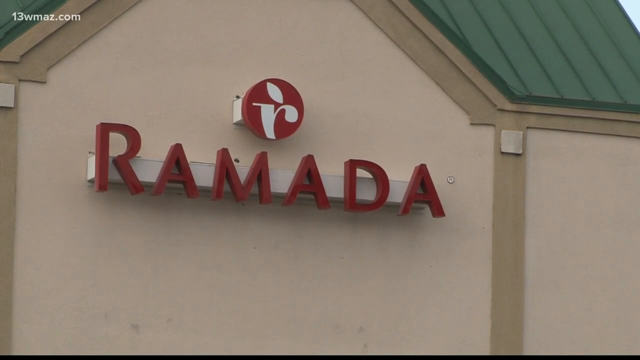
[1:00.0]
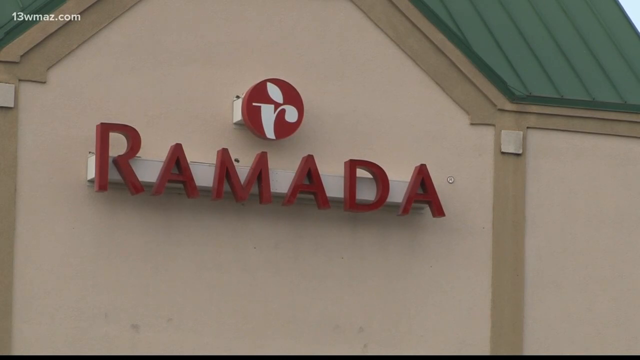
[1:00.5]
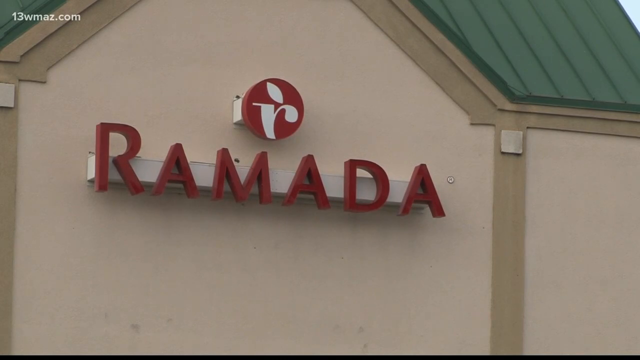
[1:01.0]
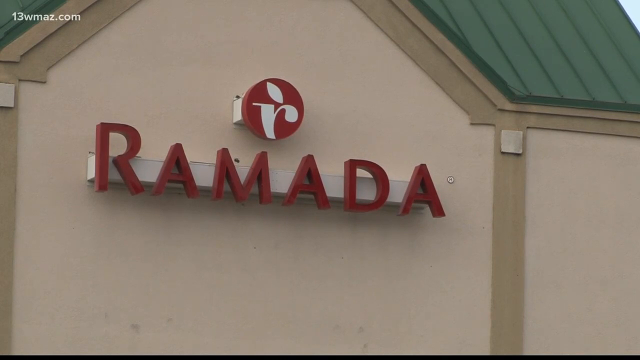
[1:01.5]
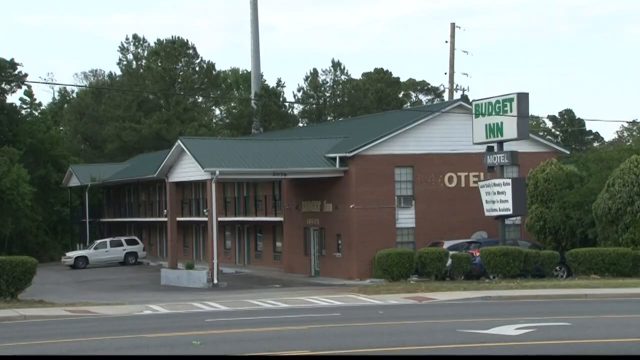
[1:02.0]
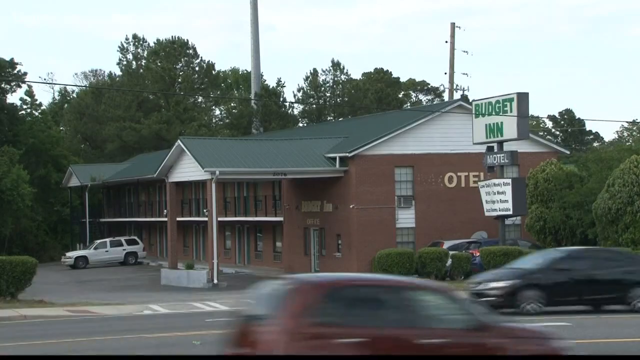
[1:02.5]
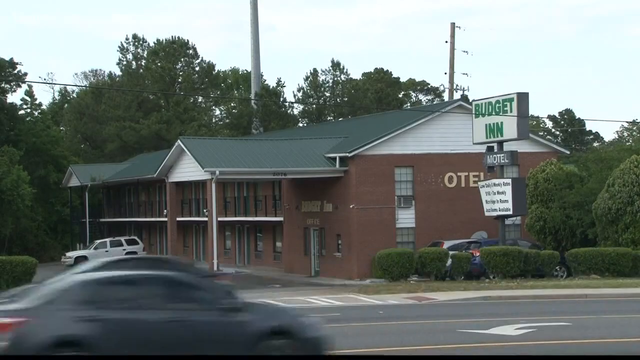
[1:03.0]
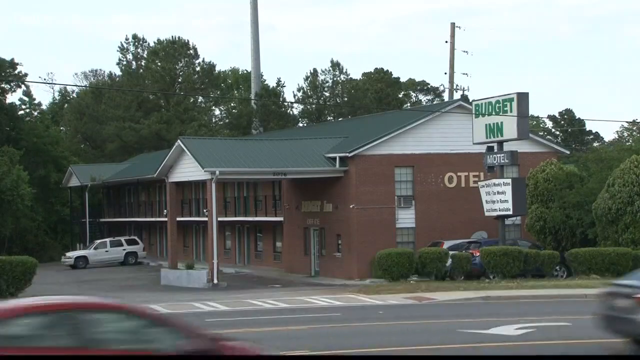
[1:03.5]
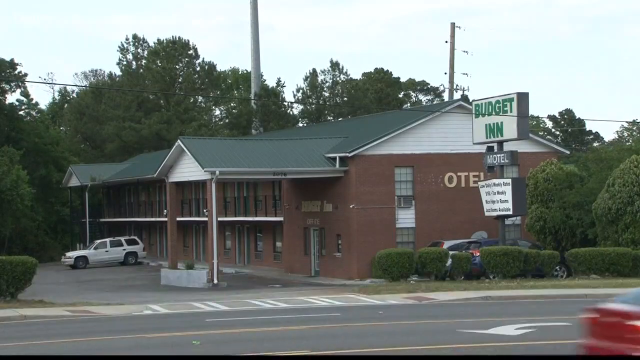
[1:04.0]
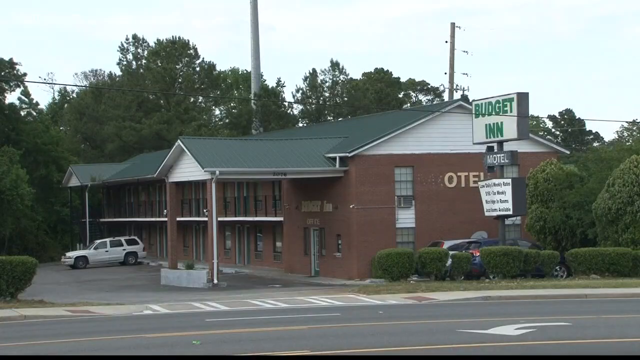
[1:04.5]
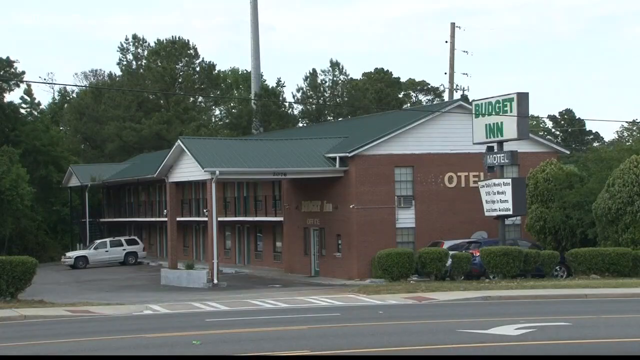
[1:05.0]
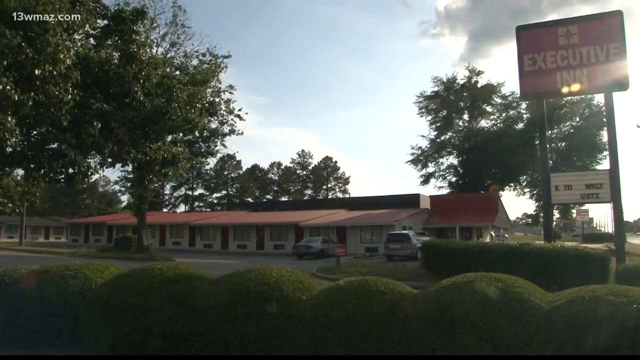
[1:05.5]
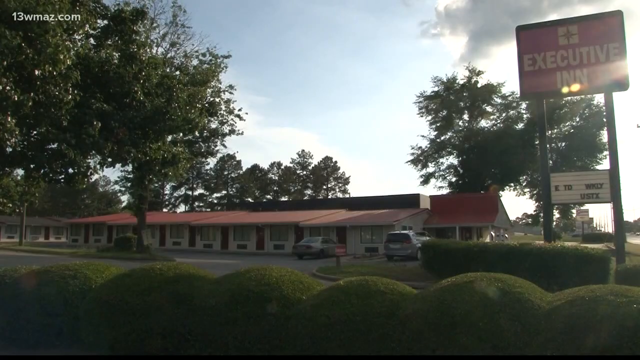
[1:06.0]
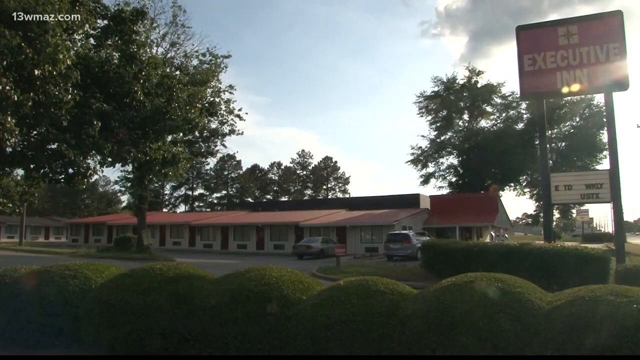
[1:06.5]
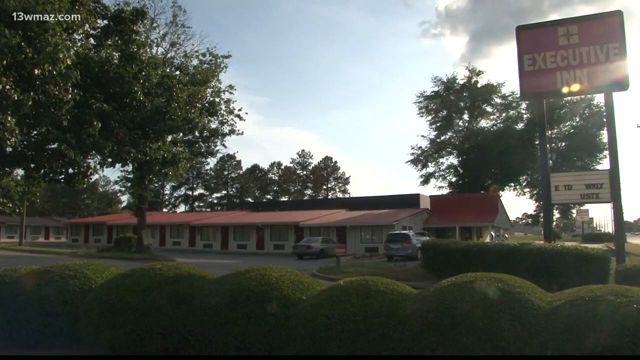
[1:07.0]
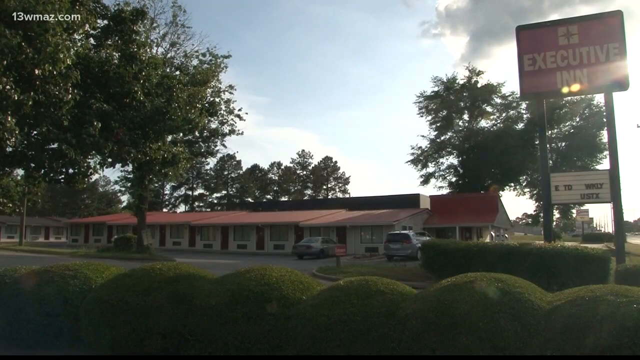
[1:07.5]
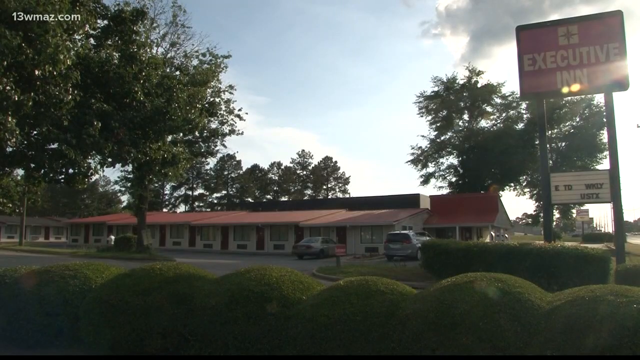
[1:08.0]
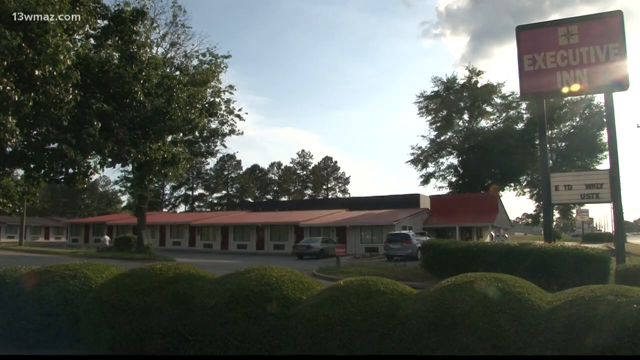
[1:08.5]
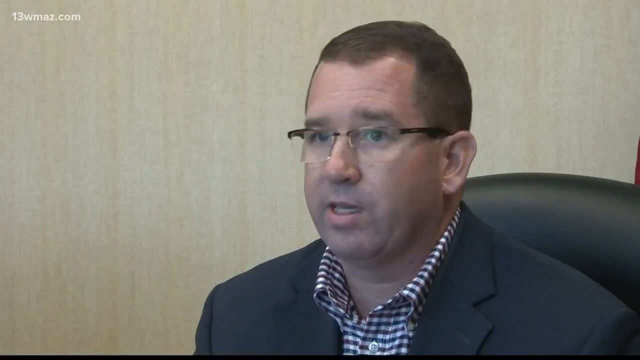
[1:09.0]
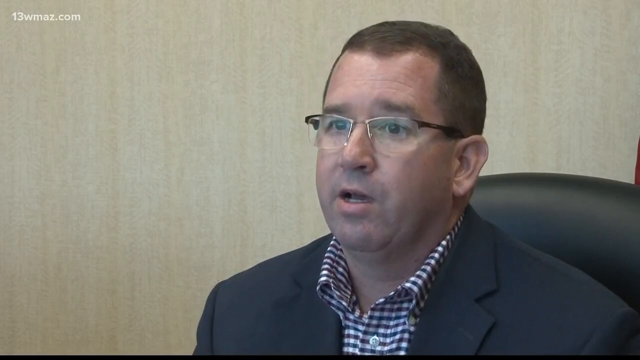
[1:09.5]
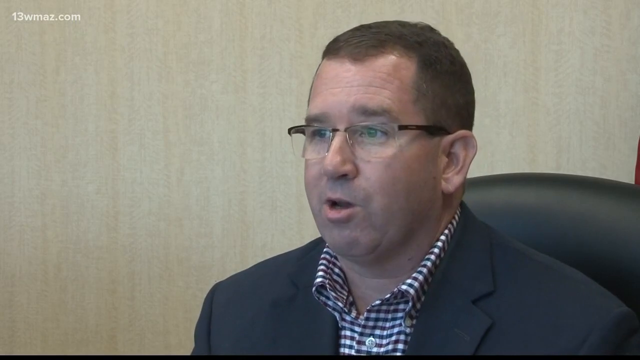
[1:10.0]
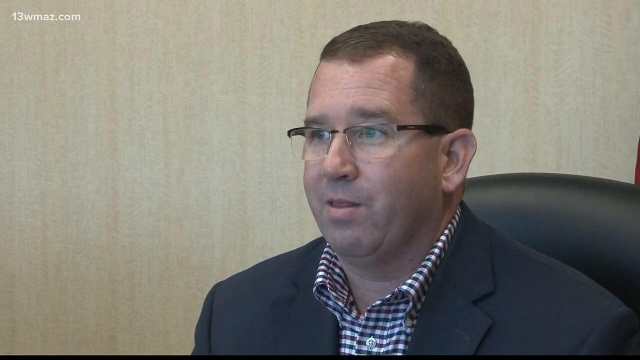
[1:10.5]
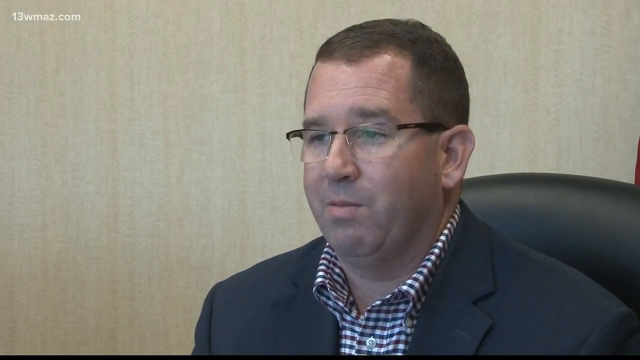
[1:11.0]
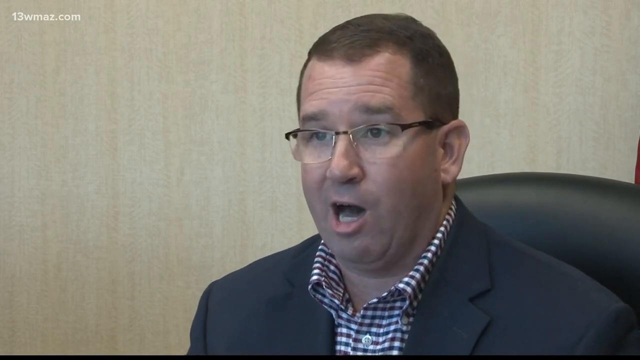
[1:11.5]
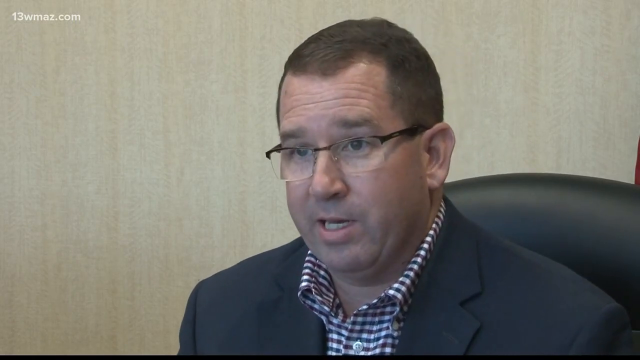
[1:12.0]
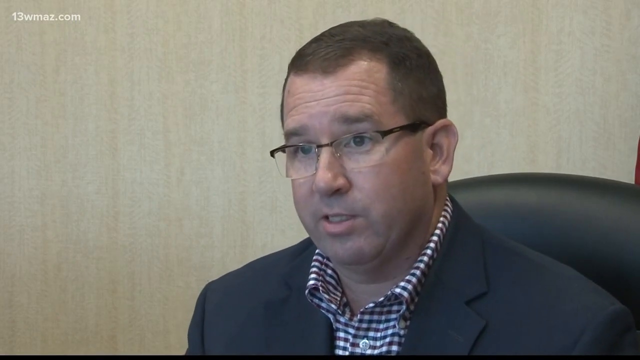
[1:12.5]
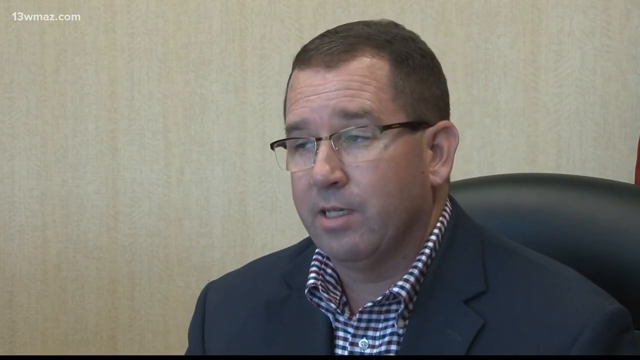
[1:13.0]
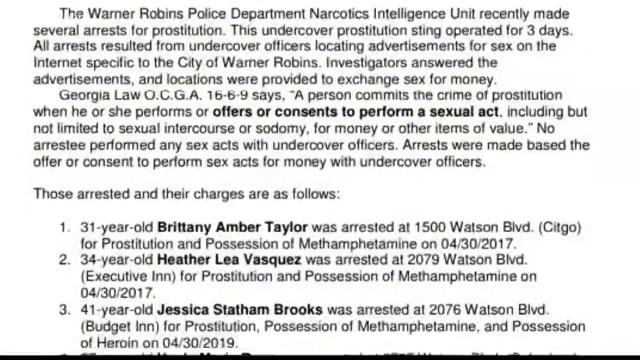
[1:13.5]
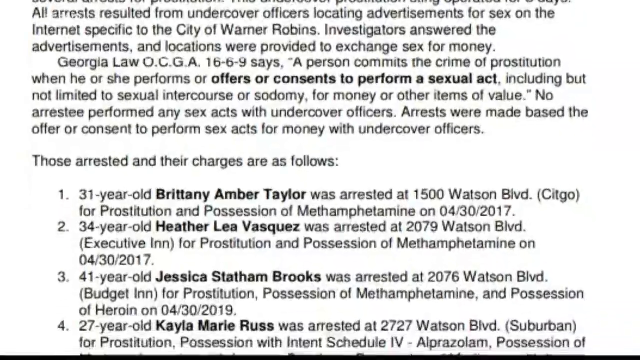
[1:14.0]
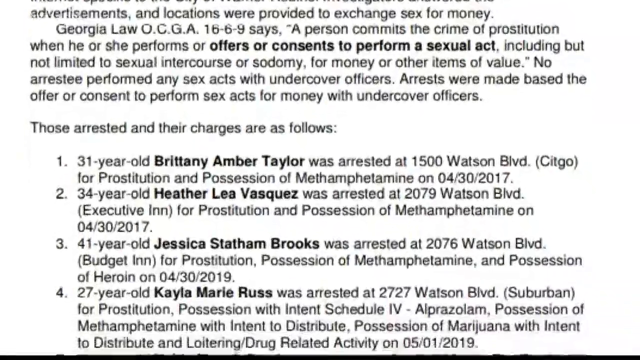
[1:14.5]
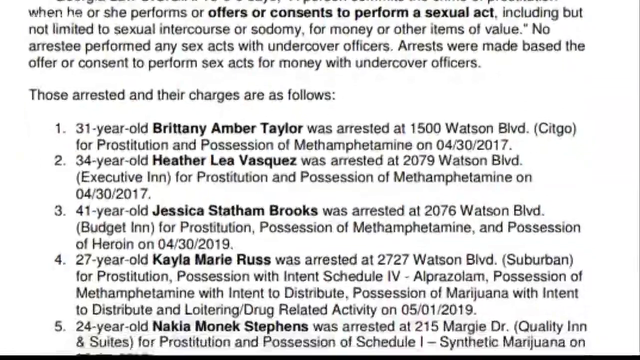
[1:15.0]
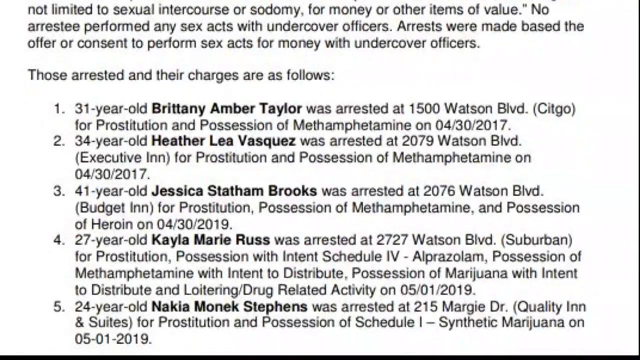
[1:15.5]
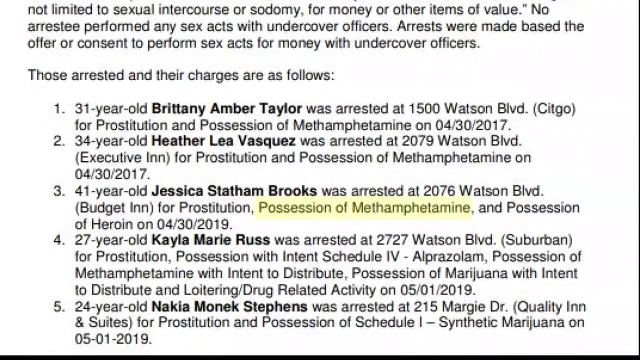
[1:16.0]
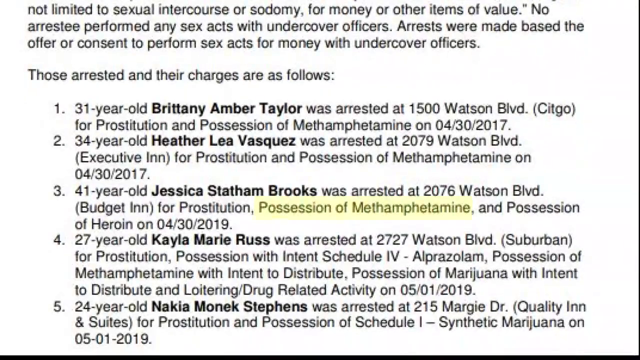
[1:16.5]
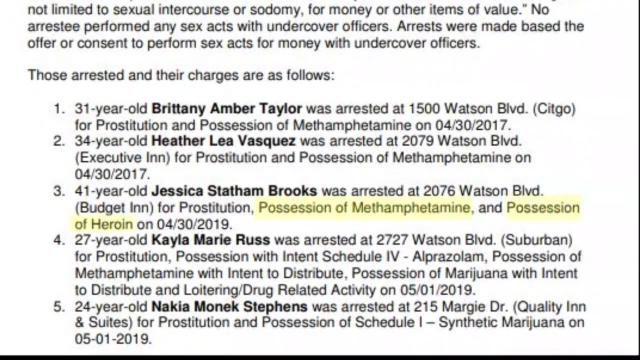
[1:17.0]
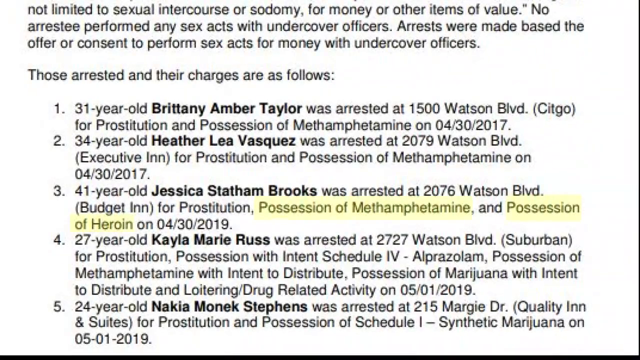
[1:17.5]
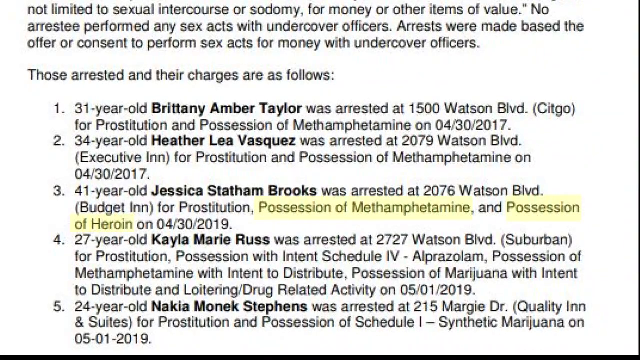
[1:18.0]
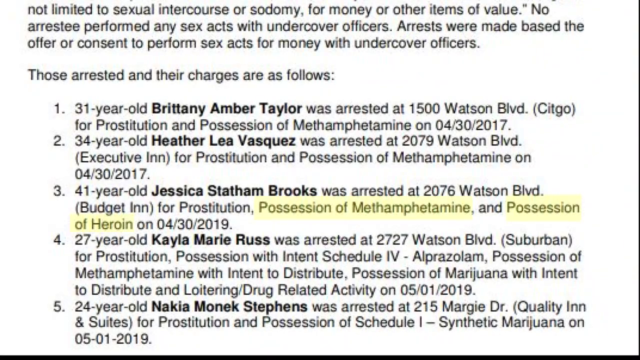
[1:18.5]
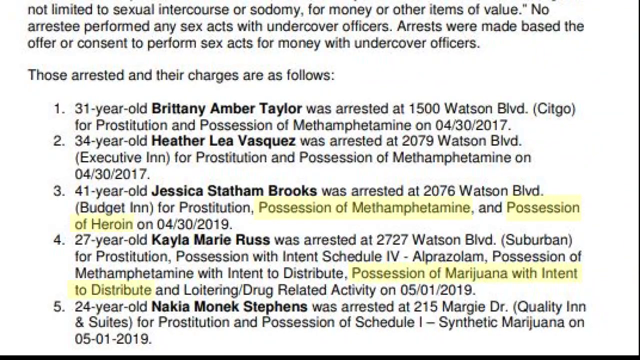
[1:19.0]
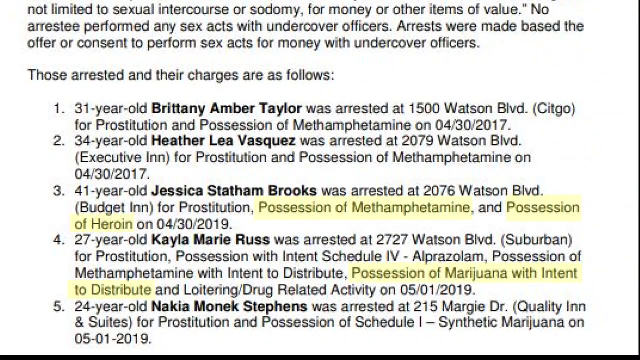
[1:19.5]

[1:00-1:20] A green roof is visible outside, along with a brown building with cars parked on the side. A very big executive inn appears with two cars parked outside and trees on the left side; this building has red roofs and is yellow. A man wearing a black jacket and a checkered shirt speaks while facing the camera, sitting on a black chair. A paper is then scrolled upwards, with writing about the charges against certain people, their ages, where they were arrested and why. Highlighted text reads "possession of methamphetamine" and "possession of heroin", and as it scrolls up the writing is in black.